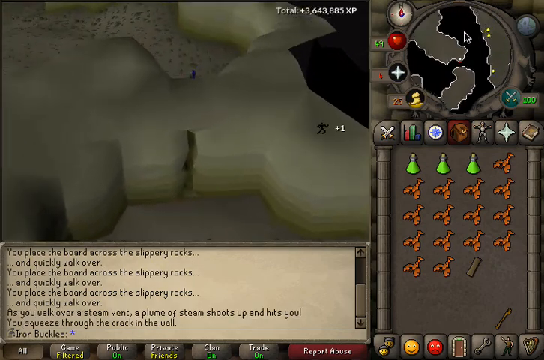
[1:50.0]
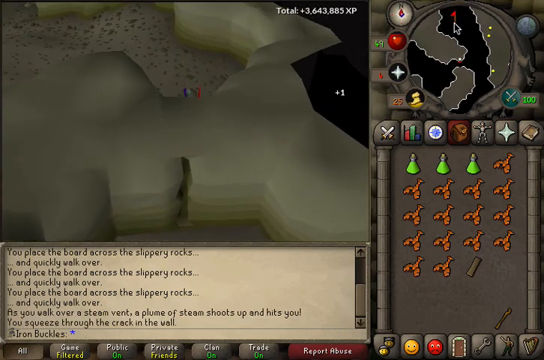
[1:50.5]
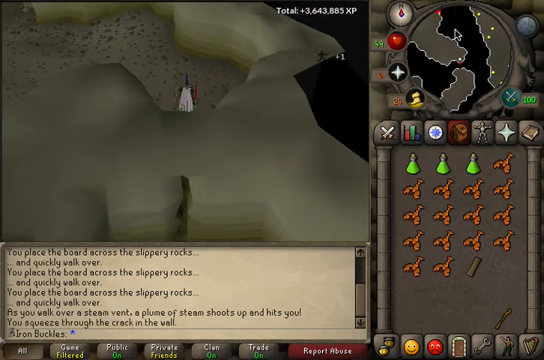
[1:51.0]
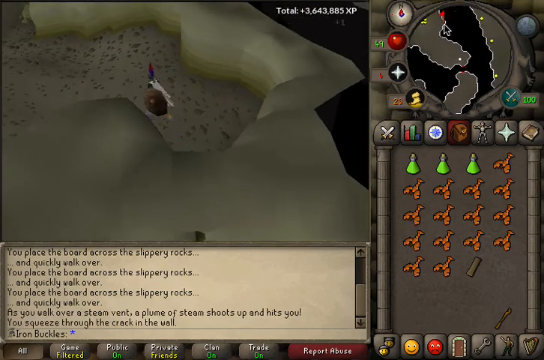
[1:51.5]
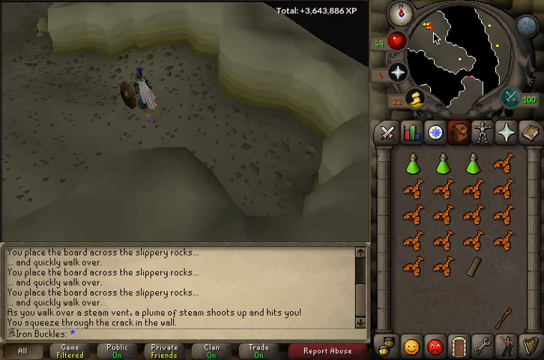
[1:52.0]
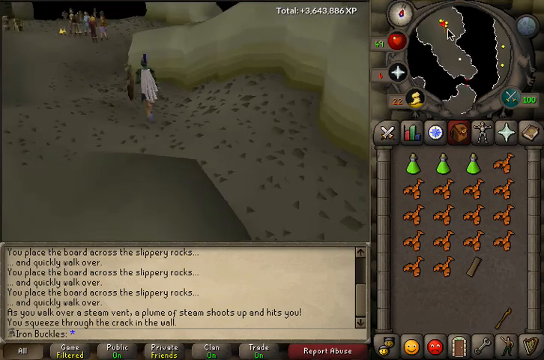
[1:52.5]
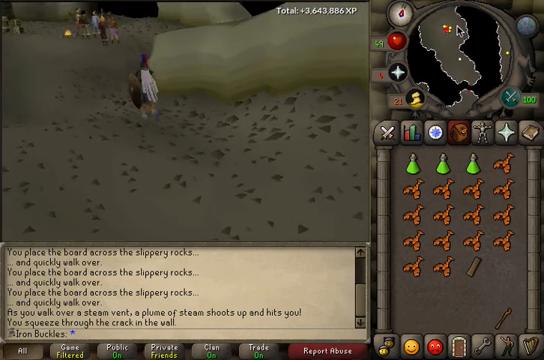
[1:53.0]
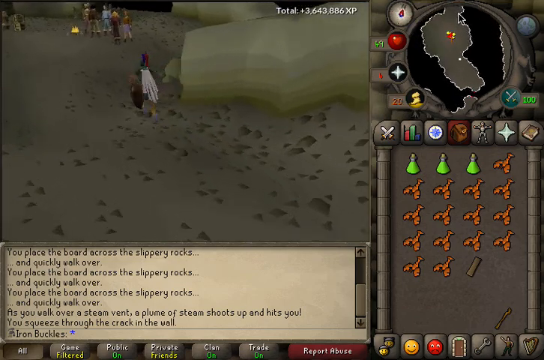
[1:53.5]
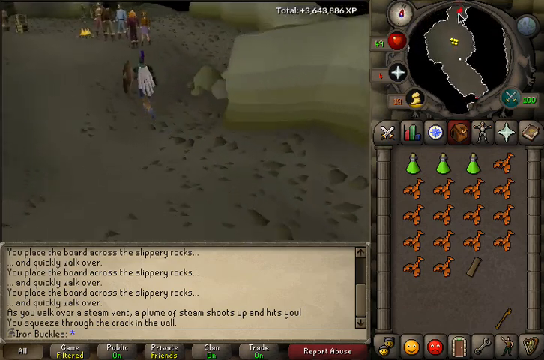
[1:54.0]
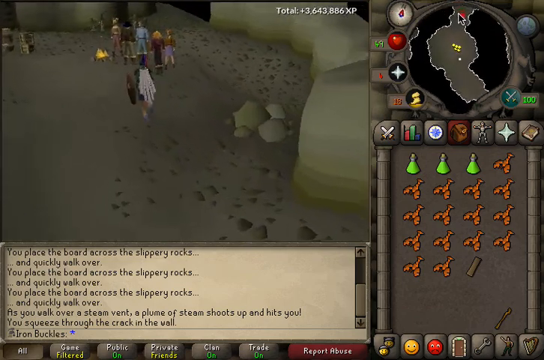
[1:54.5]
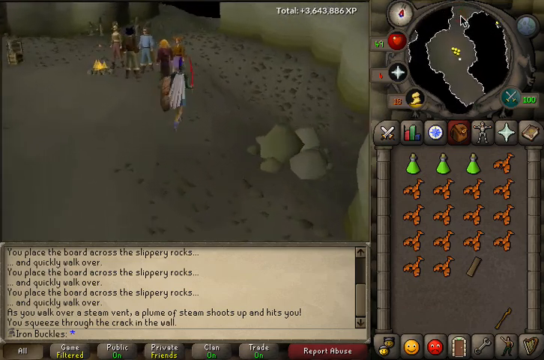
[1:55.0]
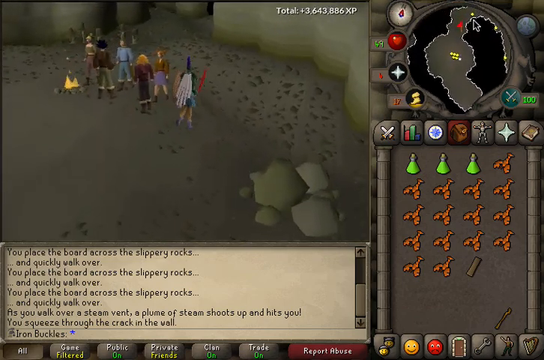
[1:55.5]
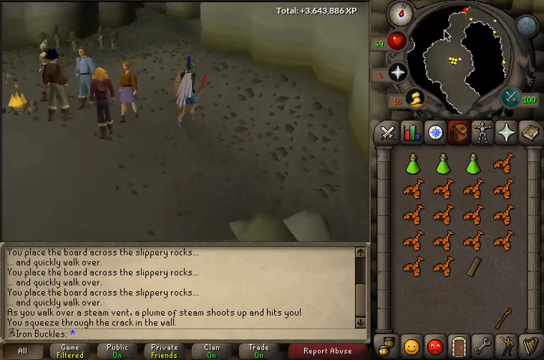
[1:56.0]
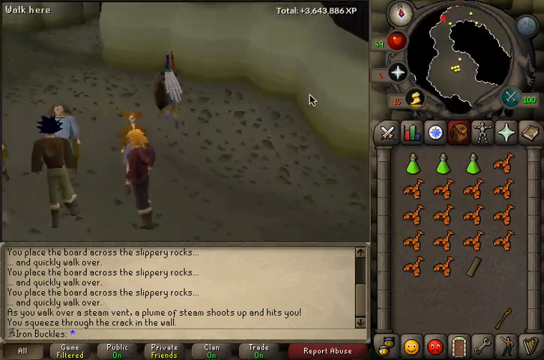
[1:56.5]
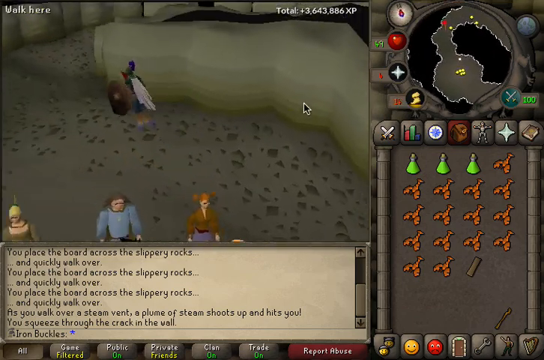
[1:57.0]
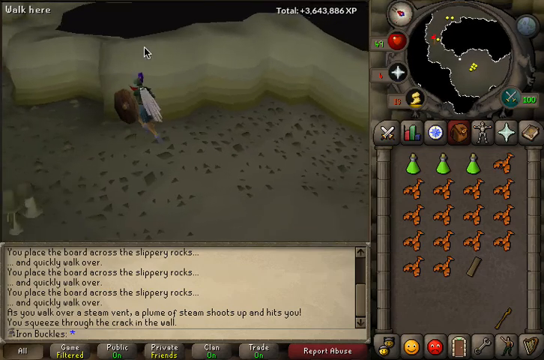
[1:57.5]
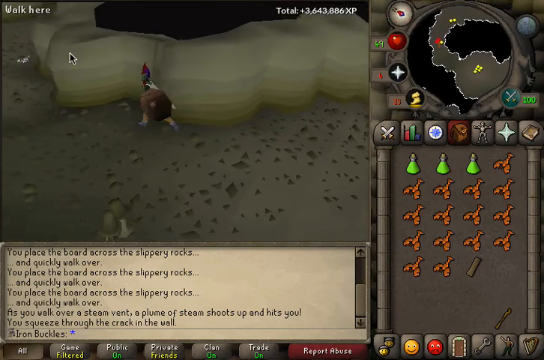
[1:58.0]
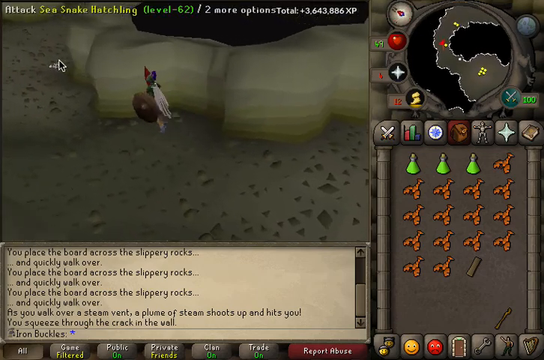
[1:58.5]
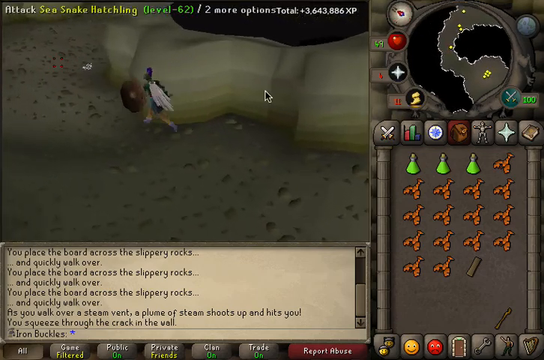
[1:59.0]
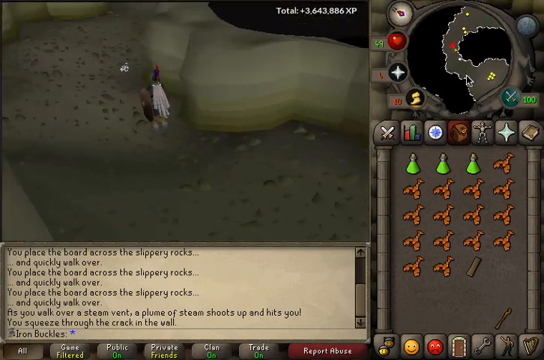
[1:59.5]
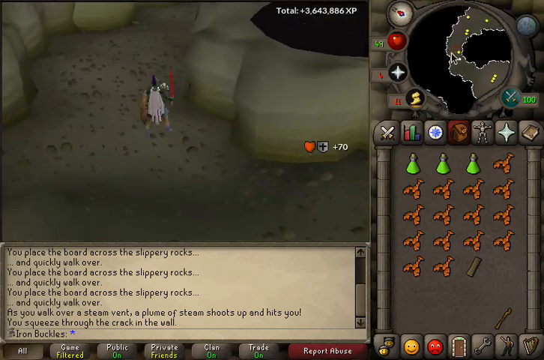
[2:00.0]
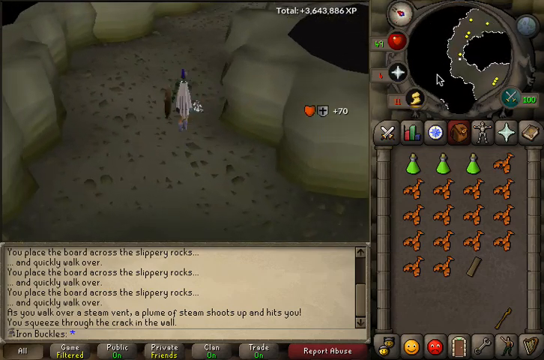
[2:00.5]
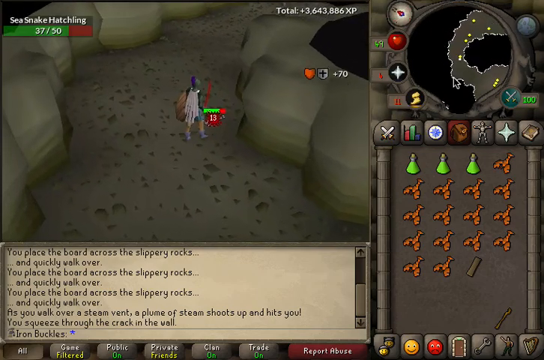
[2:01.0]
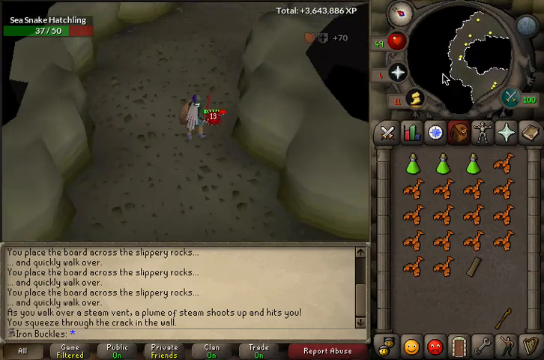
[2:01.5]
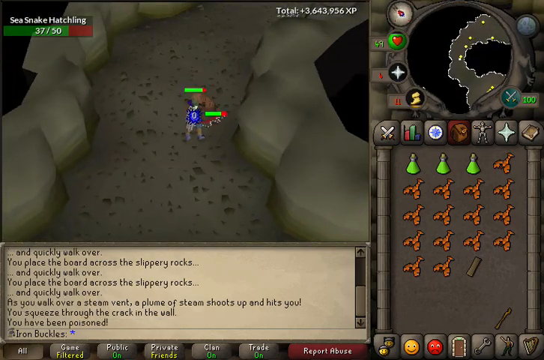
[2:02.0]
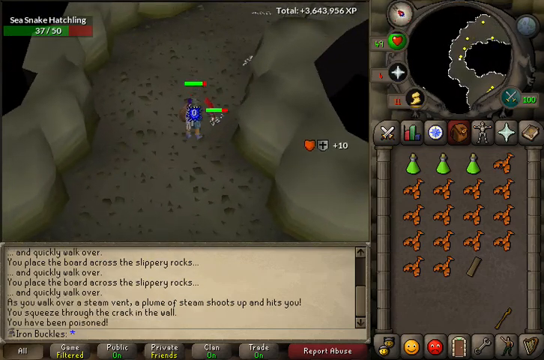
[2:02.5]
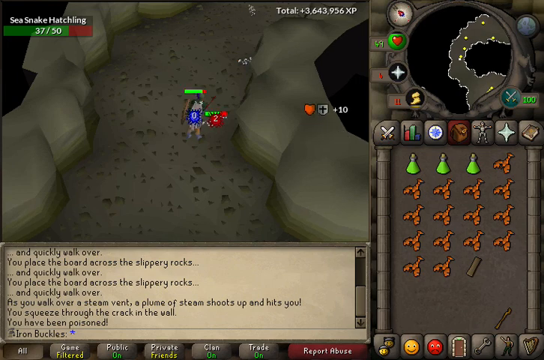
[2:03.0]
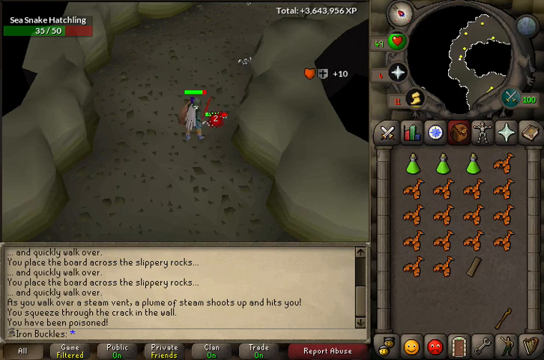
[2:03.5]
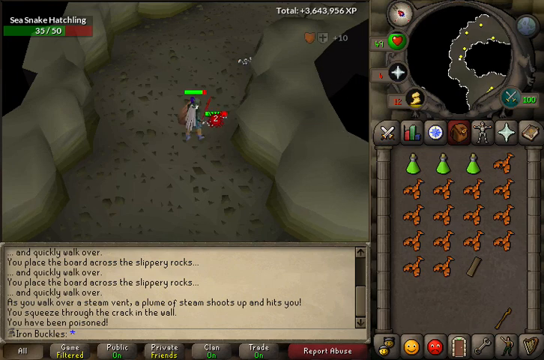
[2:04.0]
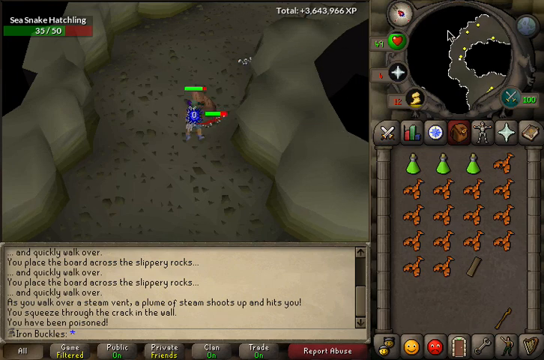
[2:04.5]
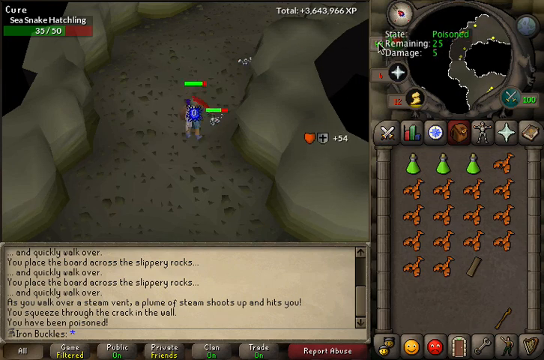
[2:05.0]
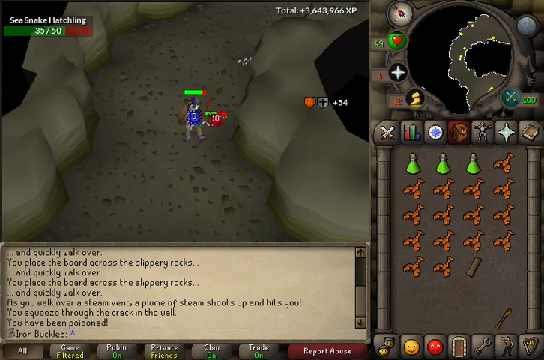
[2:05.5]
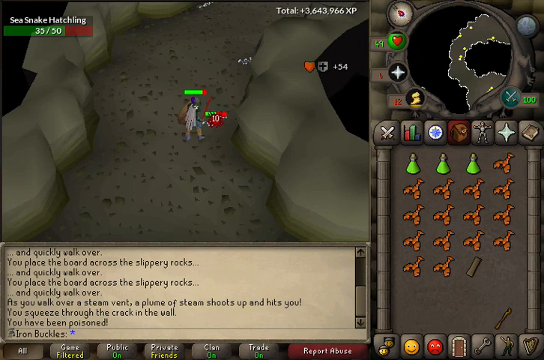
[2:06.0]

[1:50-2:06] The character seems to be about to squeeze, or coming from squeezing, through some rocks in the cave to get to another section. The map up top shows blackness around, which seems to be either unexplored or not relevant, and there seems to be a small area connecting one piece of the cave or dungeon to the next. The character slips through and heads toward what seems to be a group of maybe about five other figures standing around what seems to be a campfire. The main character is then led to what seems to be some type of nourishment and eats it; a 13 comes up, and then the character eats something else, which apparently adds something to their health.